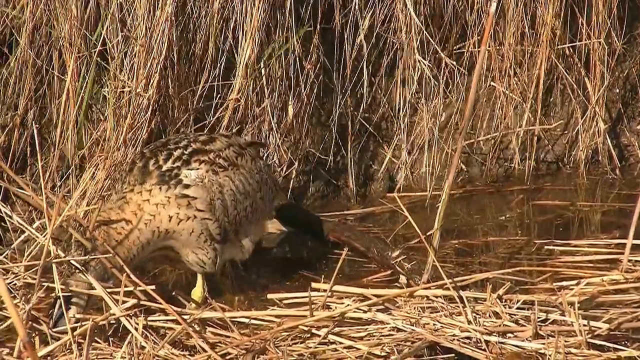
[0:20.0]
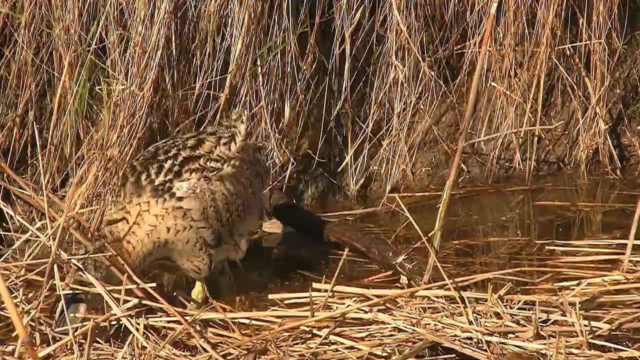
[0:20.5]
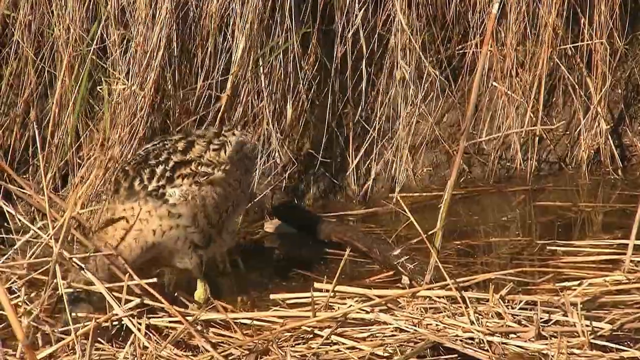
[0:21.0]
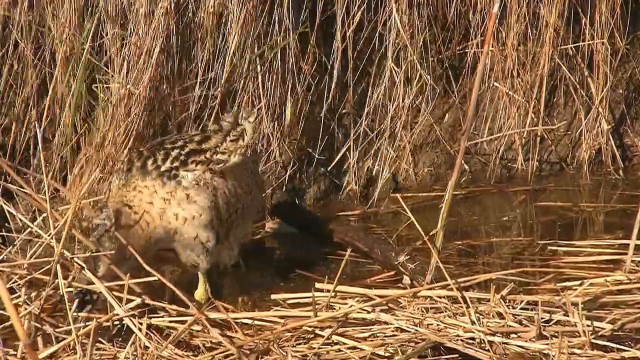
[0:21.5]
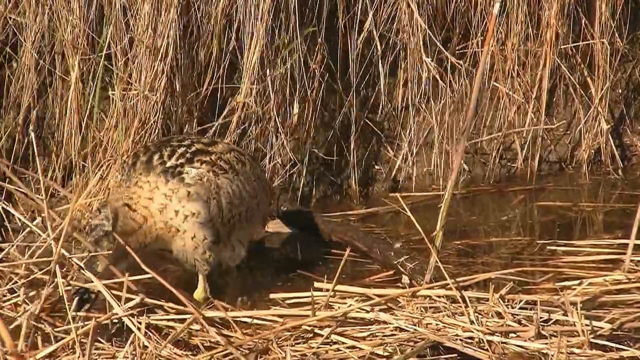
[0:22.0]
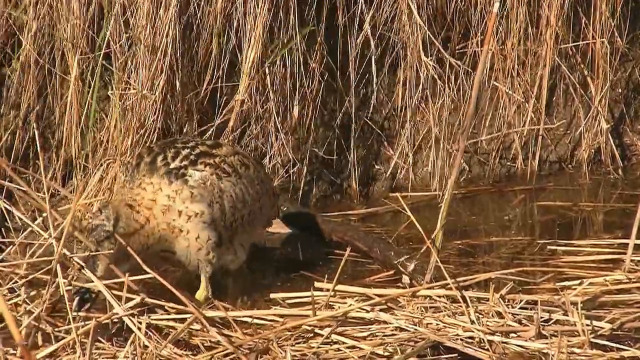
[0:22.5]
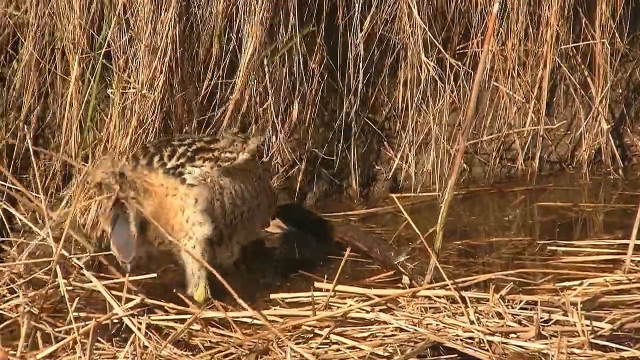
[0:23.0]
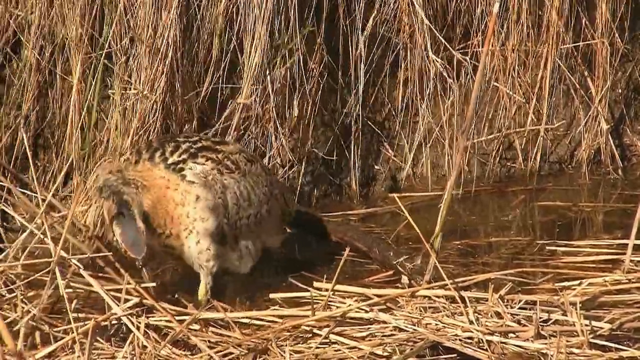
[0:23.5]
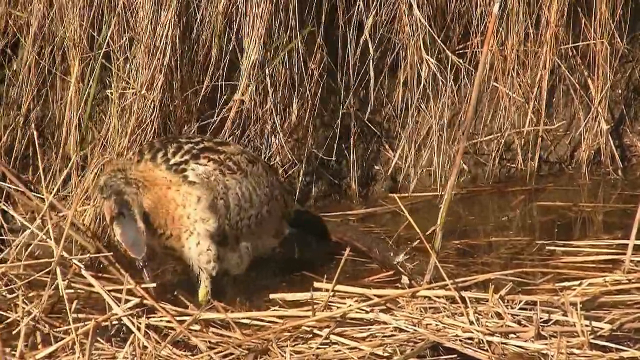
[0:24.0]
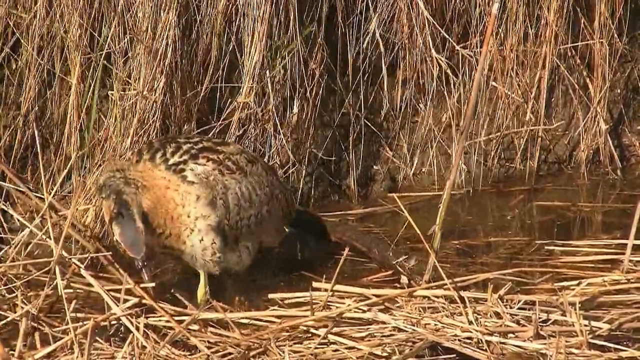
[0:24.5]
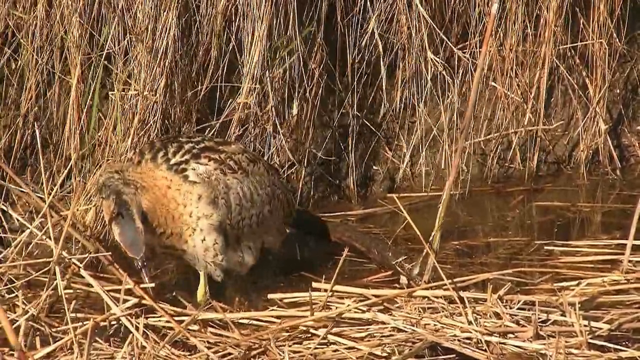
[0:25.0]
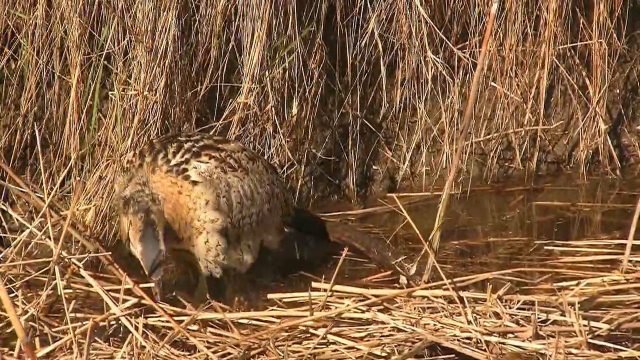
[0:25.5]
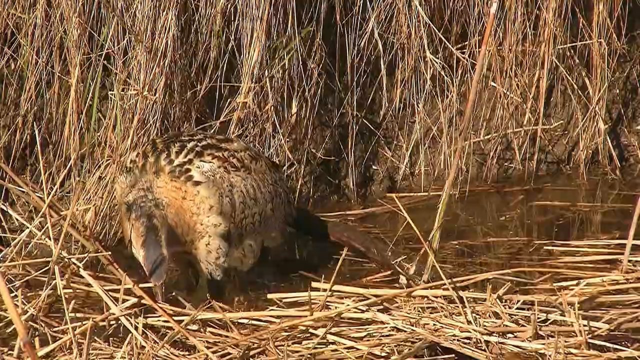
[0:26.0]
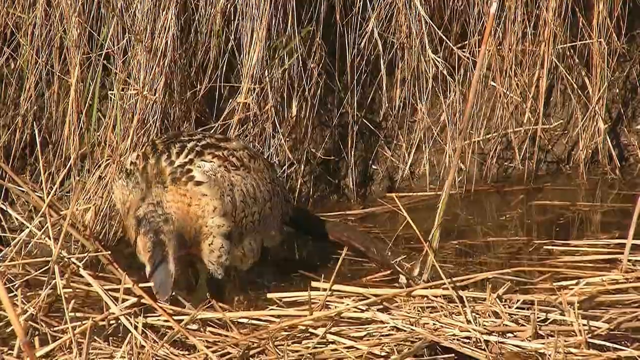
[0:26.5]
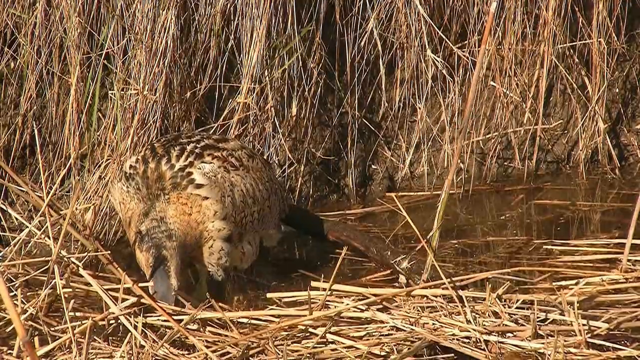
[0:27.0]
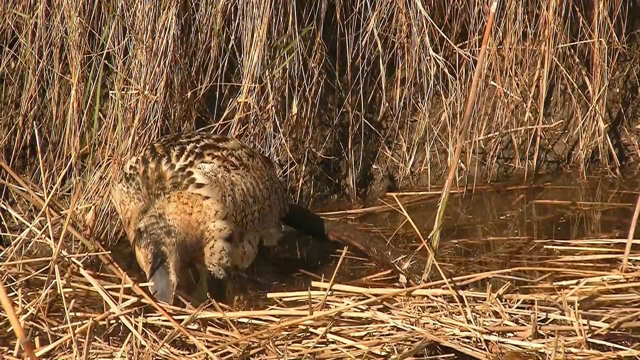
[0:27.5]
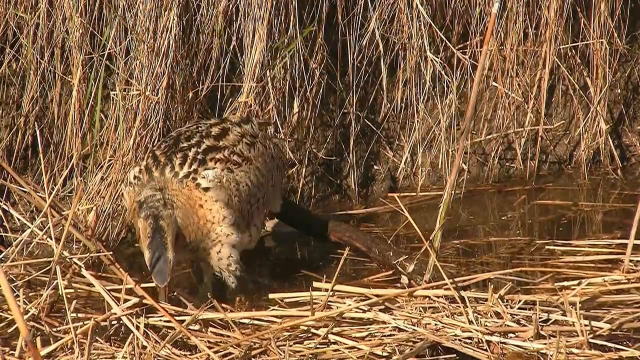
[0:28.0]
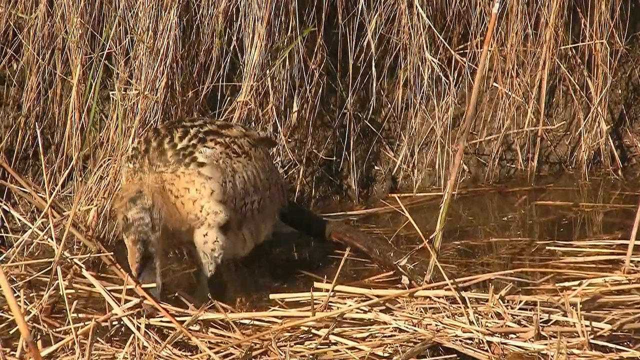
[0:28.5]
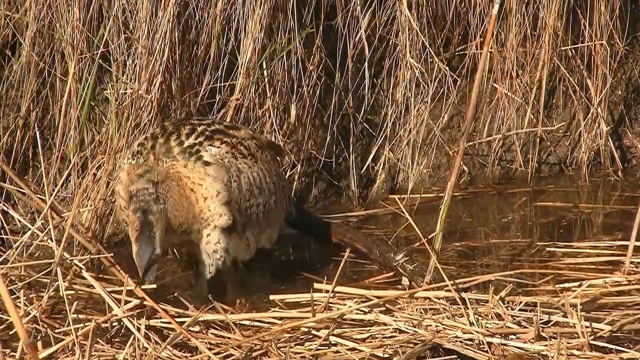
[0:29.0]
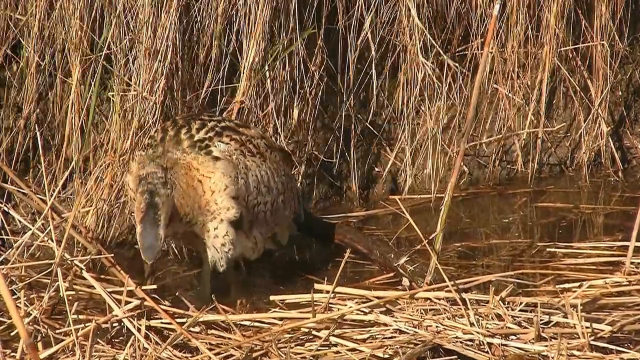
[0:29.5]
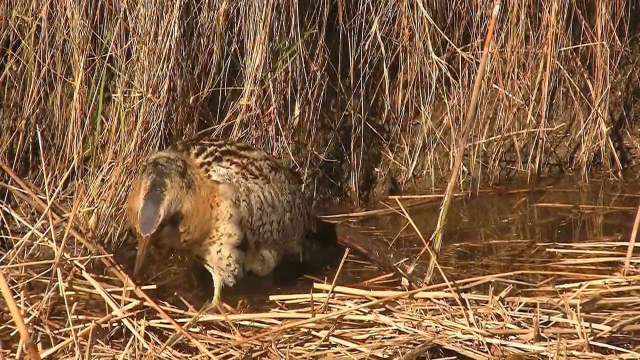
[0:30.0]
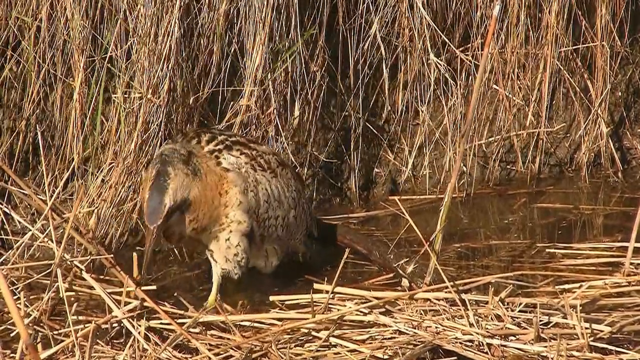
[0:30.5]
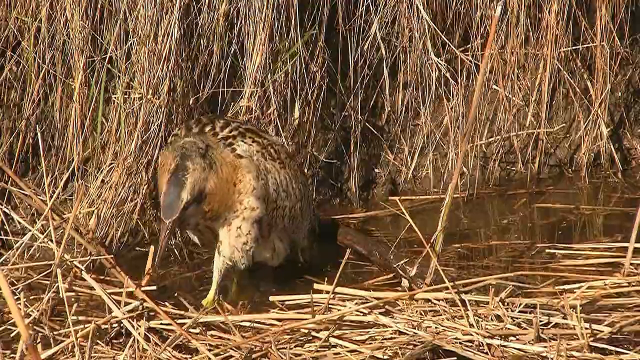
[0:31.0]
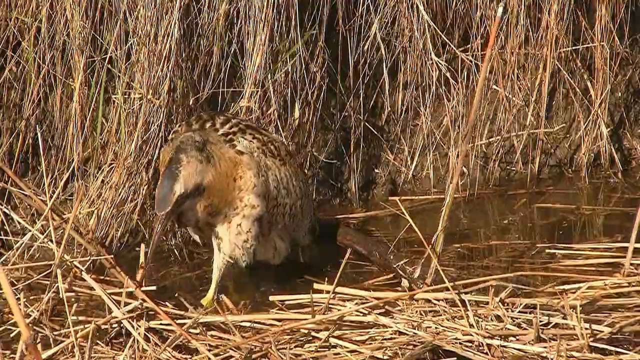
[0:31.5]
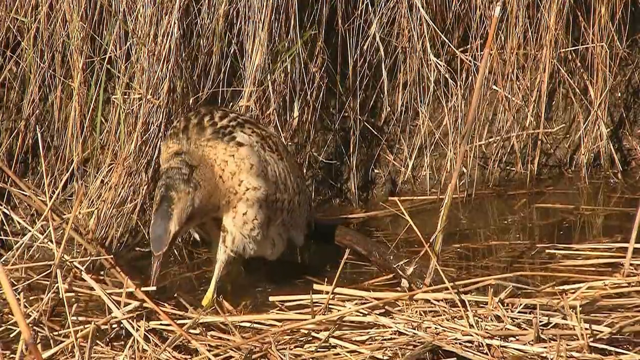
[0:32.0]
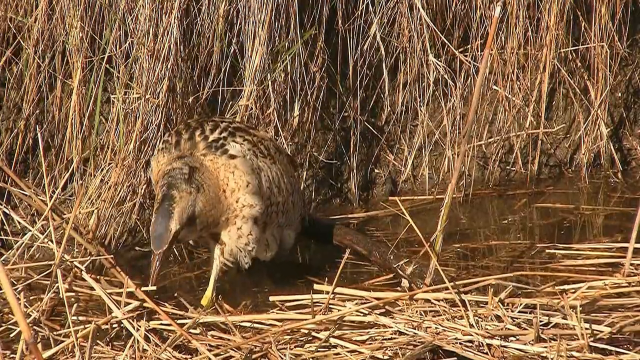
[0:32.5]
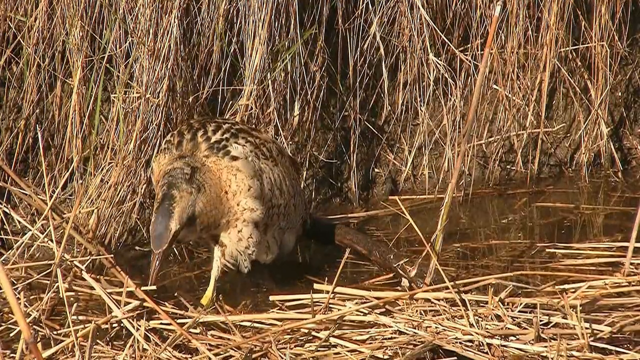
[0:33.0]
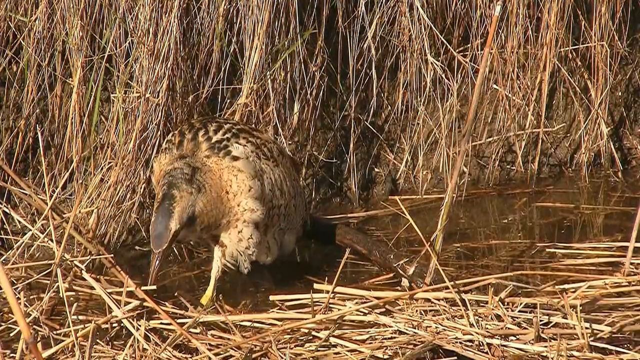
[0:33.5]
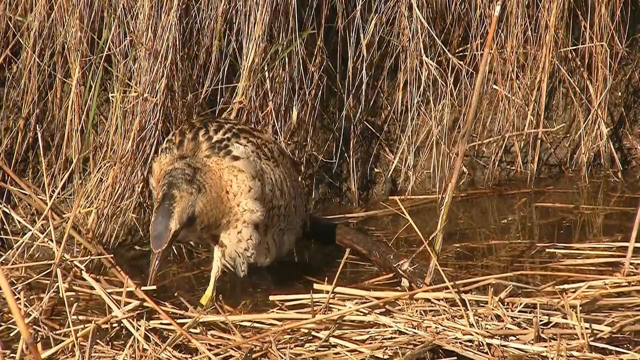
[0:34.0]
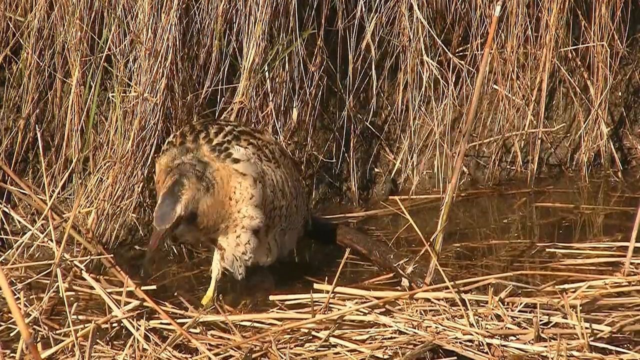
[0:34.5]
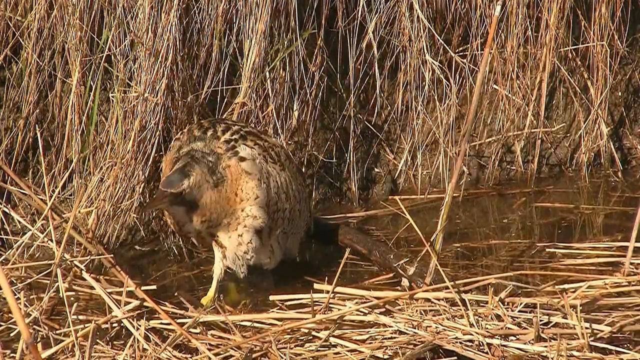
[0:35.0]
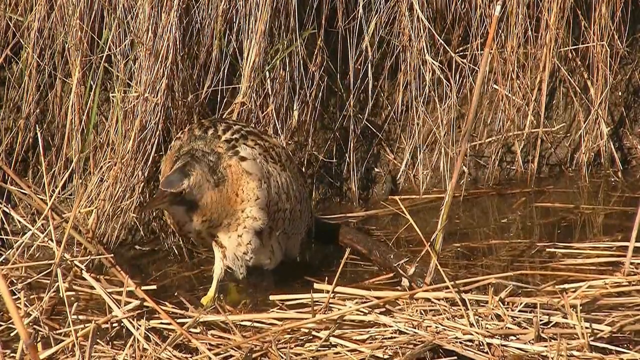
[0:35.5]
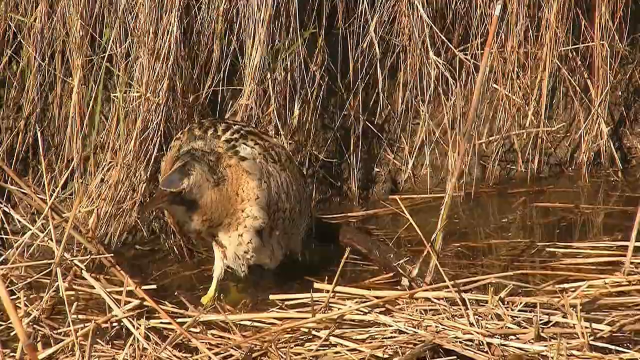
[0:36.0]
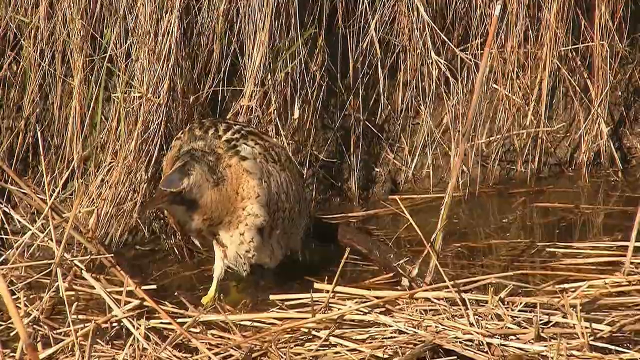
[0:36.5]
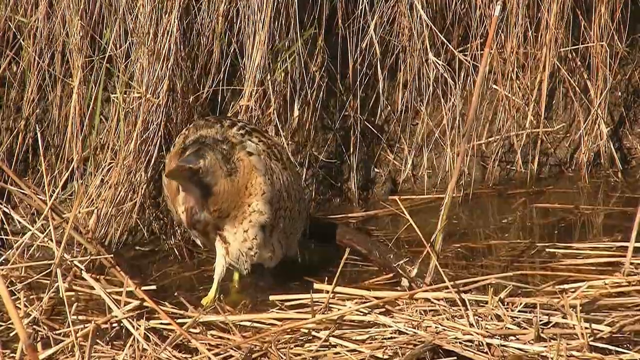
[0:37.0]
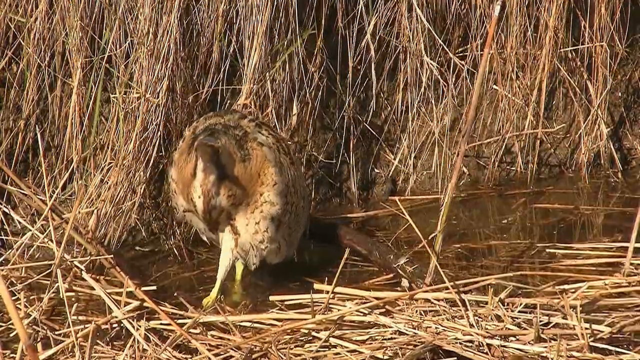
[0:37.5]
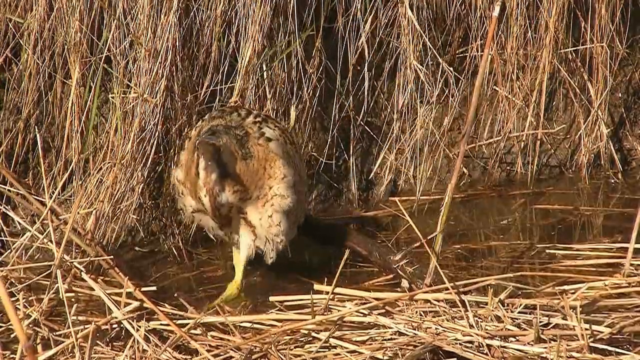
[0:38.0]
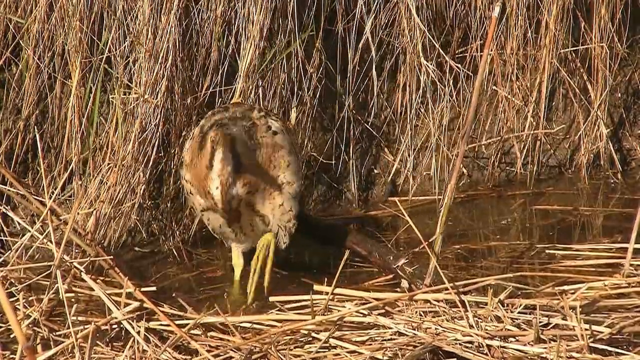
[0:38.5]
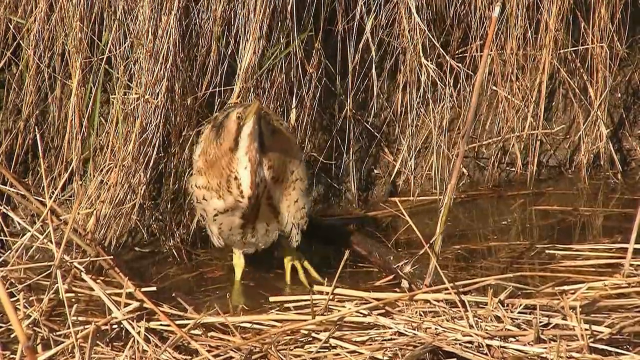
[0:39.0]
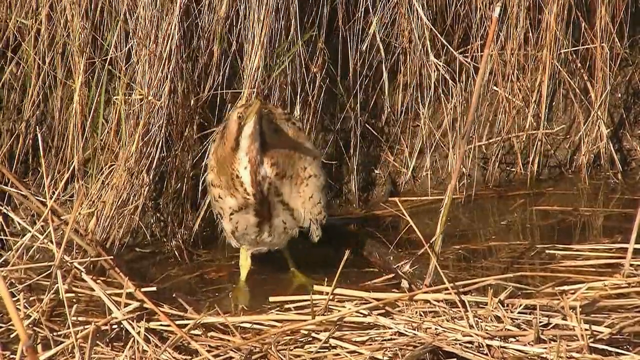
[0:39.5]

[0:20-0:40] The bittern wades in the shallows, trying to find a crustacean, frog, small fish or even a snake to eat. It is very focused, bent over and peering into the depths of the water, standing in about three or four inches of water. Its legs are yellow. Its head has very small black feathers, and plenty of beige feathers and some white ones are scattered throughout its body. The bittern is about a foot away from the shore, where a lot of grass grows about two feet tall, most of it beige and brittle. Many broken stalks of this straw-like grass float on the surface of the brown water. The sun is shining; it is daytime. The bird doesn't seem to notice anything else there and stays focused on hunting small creatures it can grab quickly with its beak.